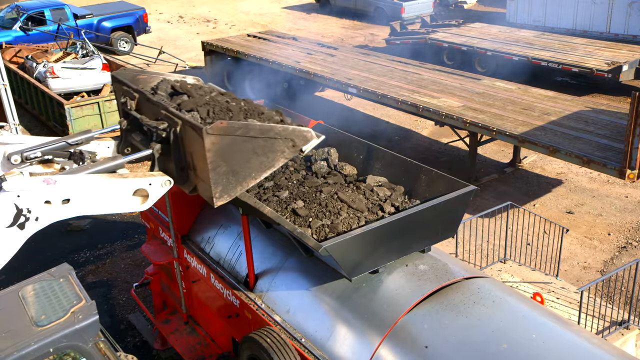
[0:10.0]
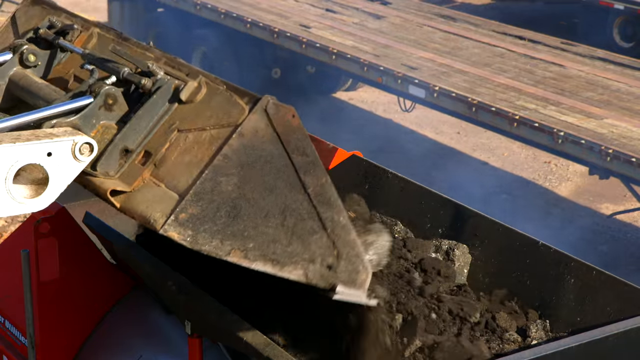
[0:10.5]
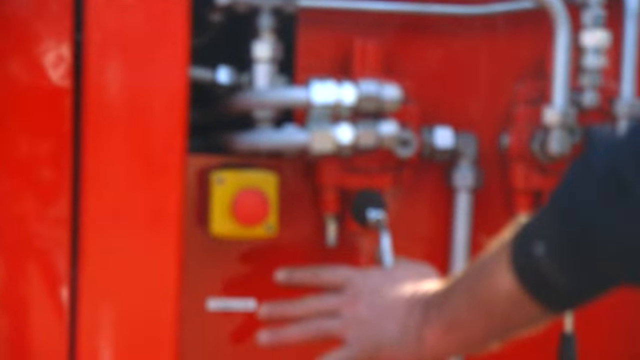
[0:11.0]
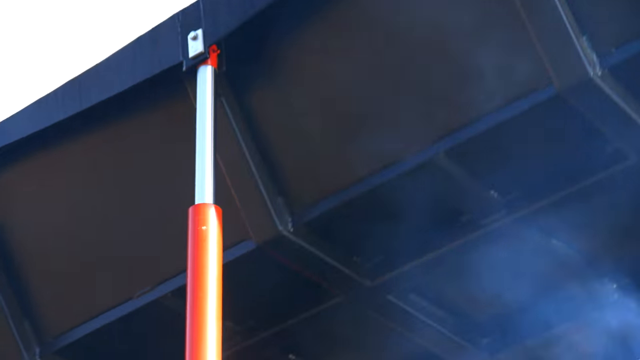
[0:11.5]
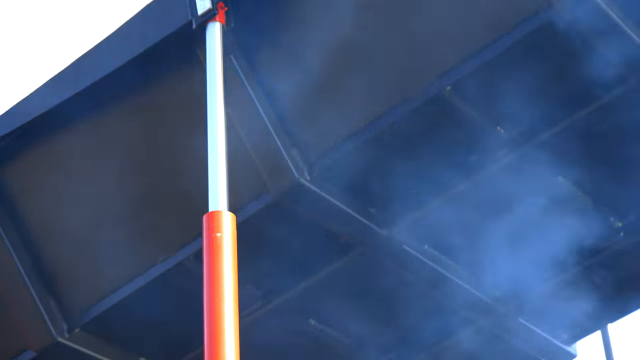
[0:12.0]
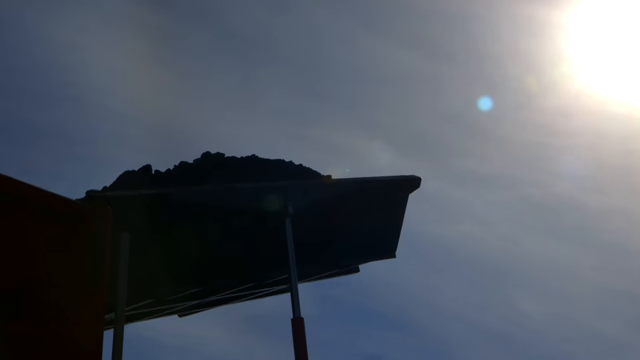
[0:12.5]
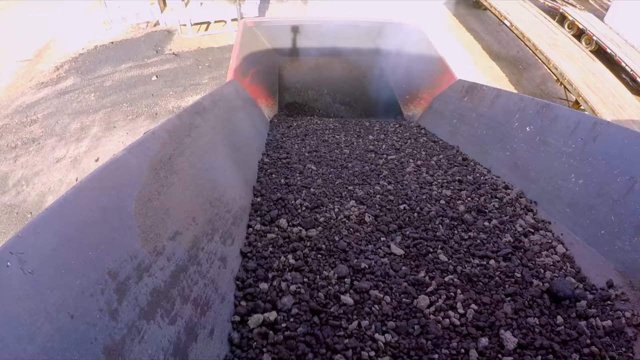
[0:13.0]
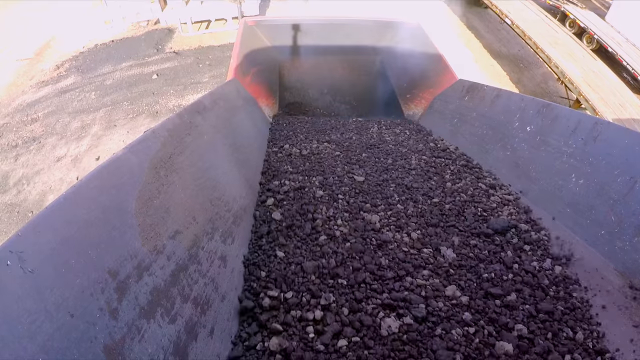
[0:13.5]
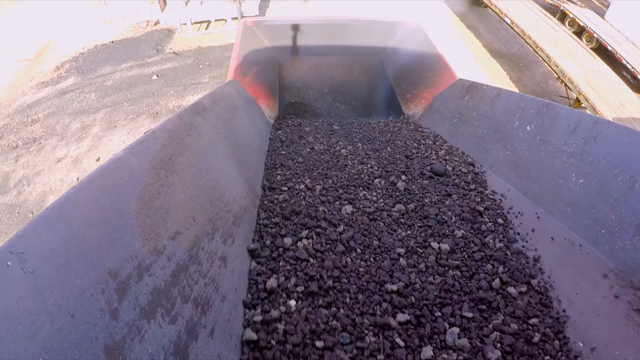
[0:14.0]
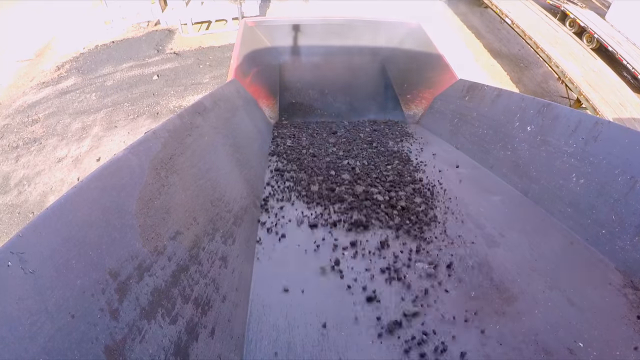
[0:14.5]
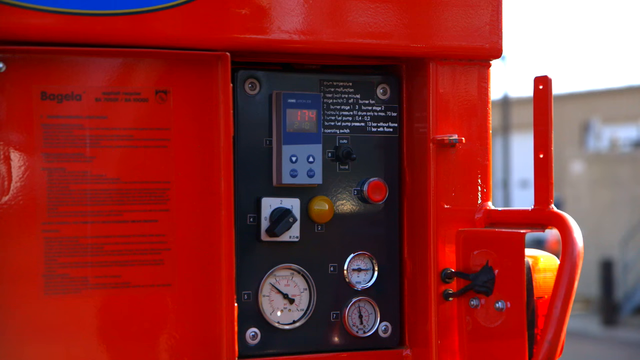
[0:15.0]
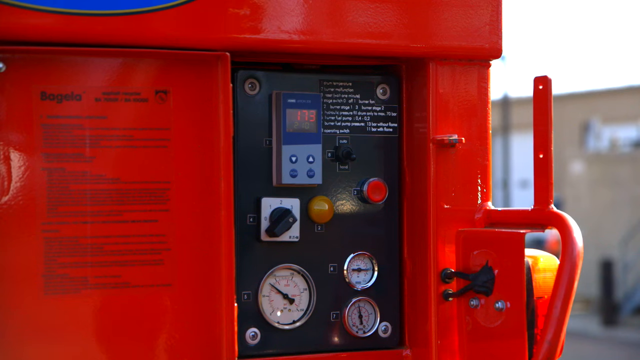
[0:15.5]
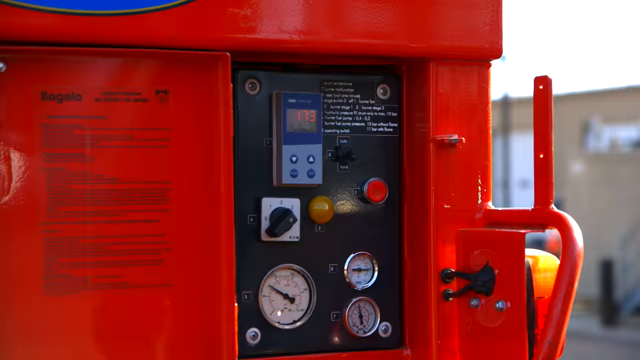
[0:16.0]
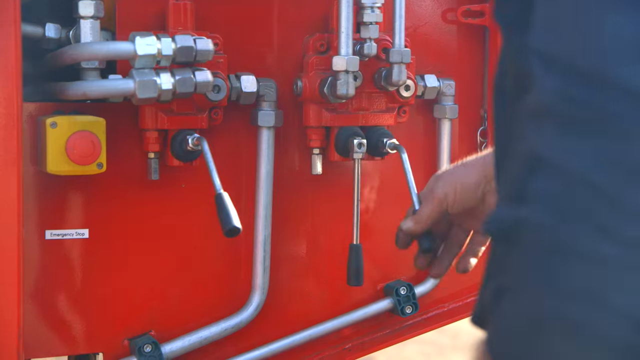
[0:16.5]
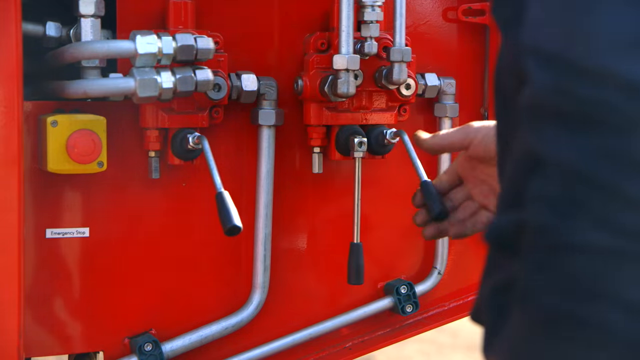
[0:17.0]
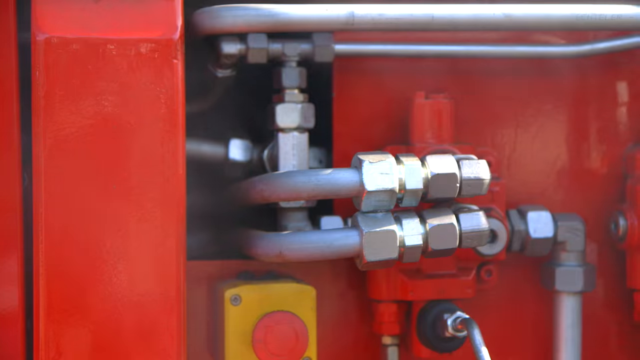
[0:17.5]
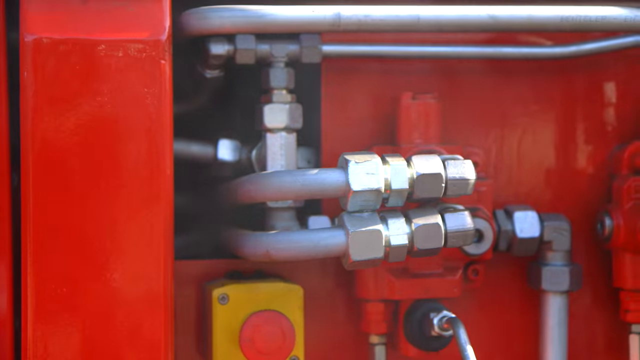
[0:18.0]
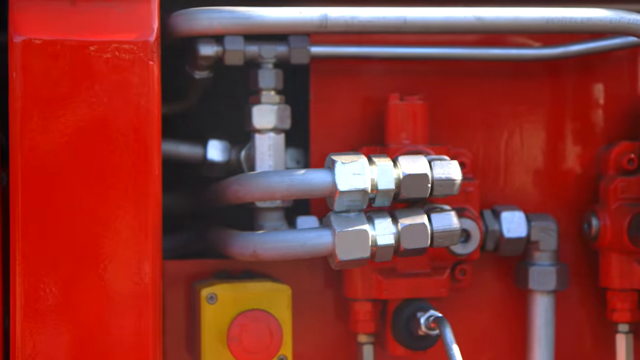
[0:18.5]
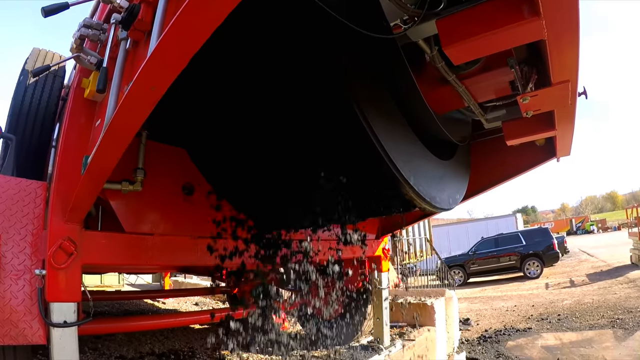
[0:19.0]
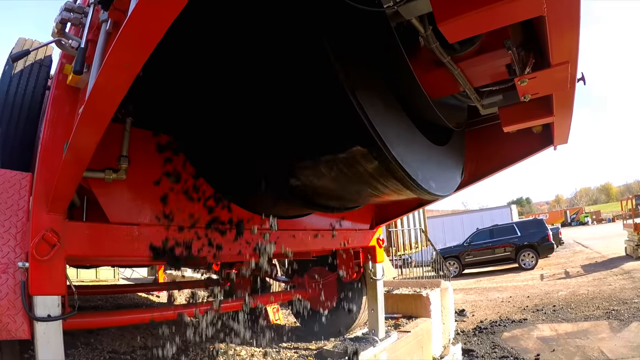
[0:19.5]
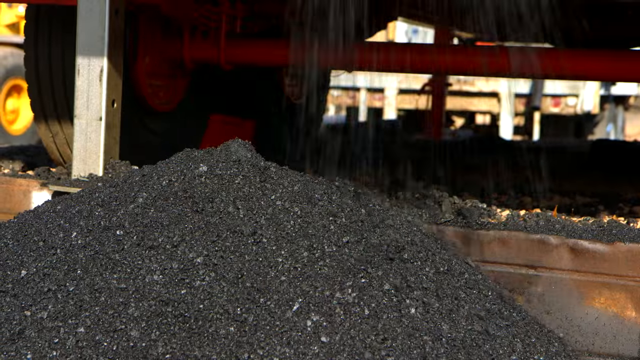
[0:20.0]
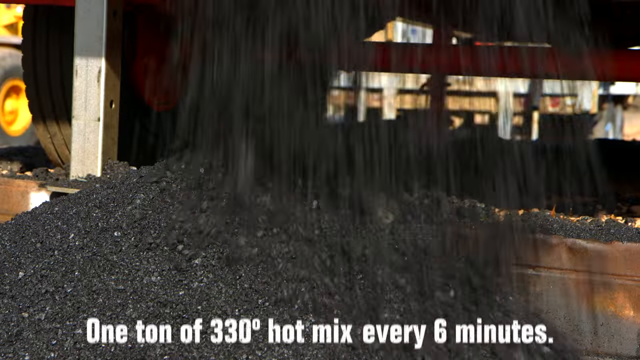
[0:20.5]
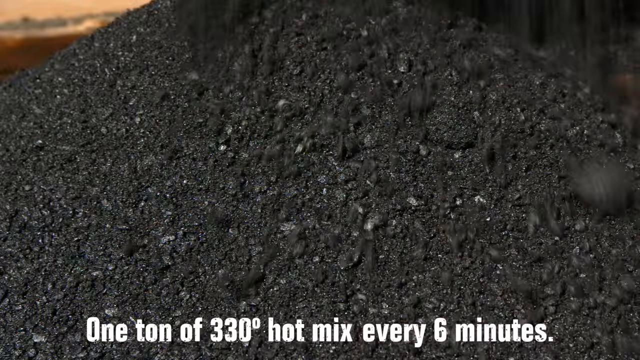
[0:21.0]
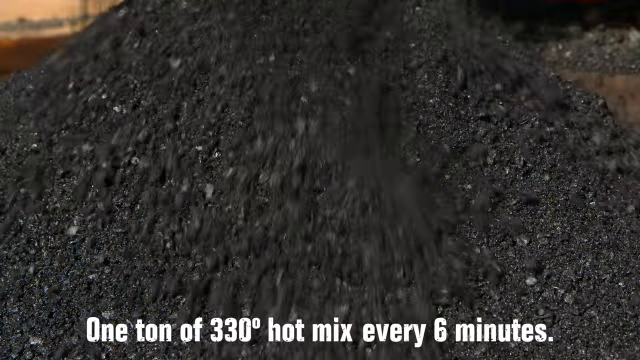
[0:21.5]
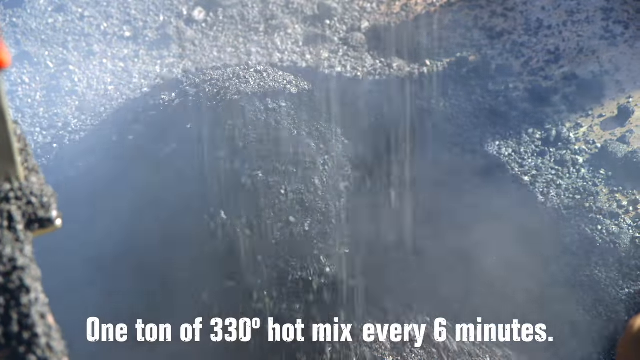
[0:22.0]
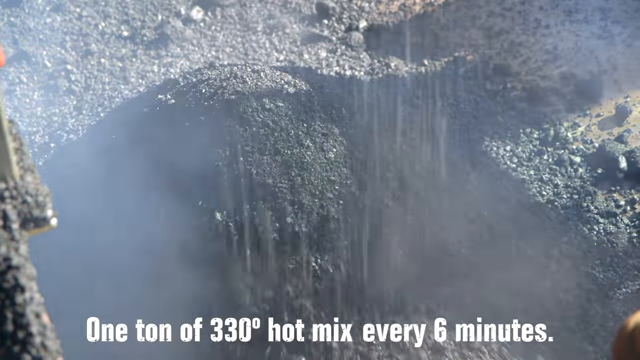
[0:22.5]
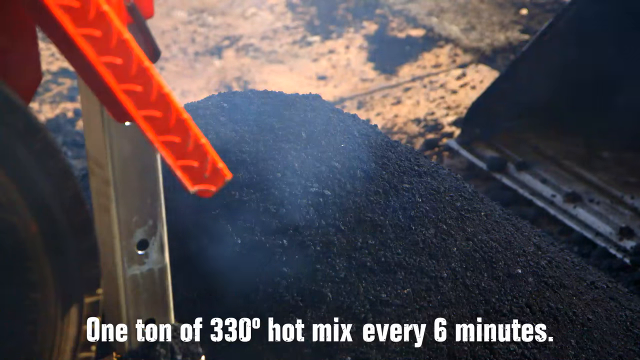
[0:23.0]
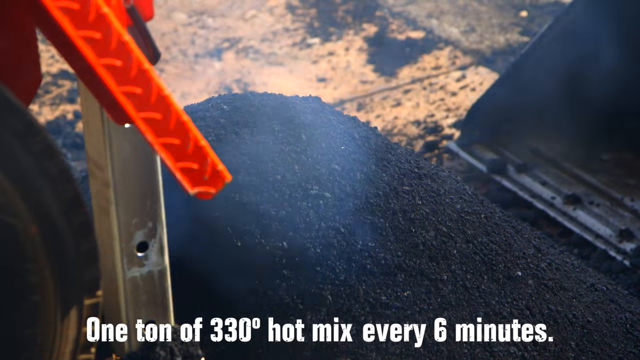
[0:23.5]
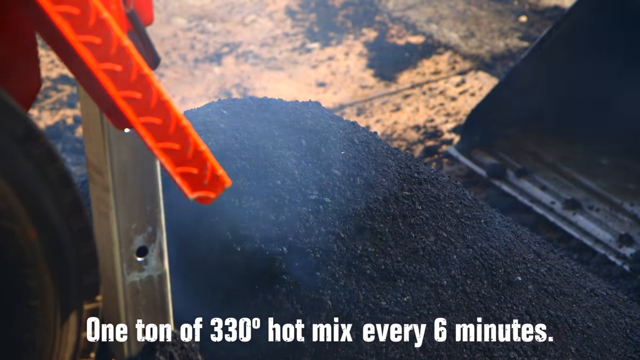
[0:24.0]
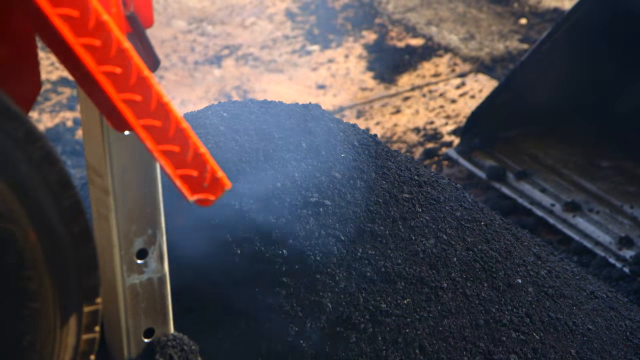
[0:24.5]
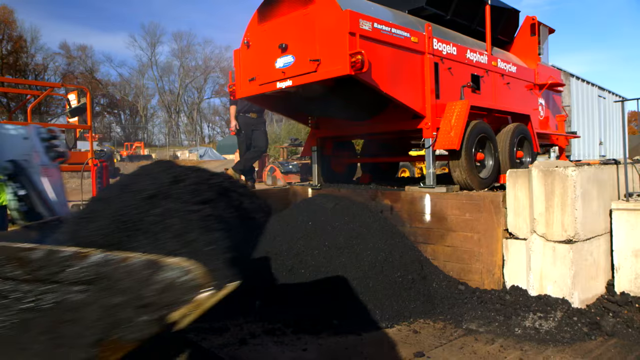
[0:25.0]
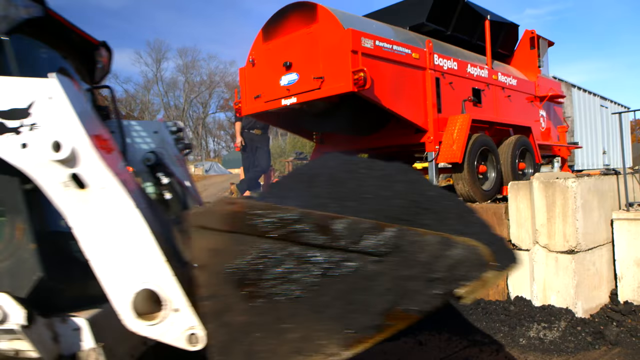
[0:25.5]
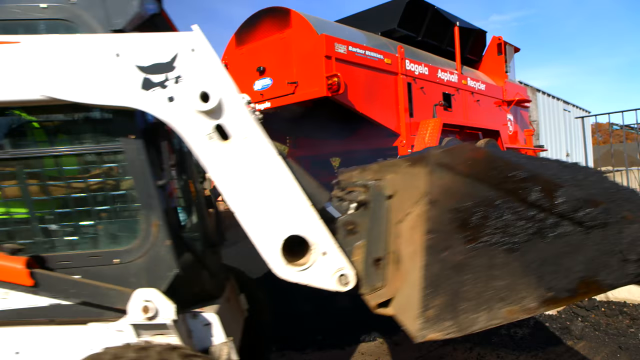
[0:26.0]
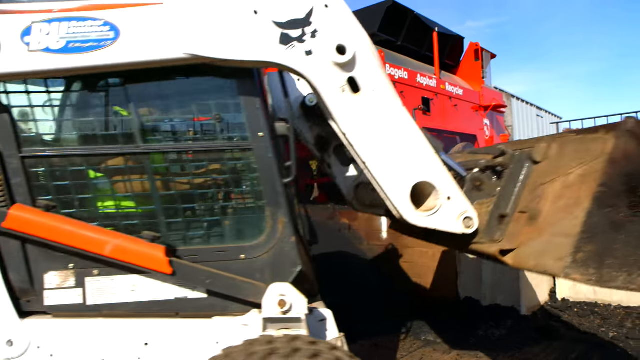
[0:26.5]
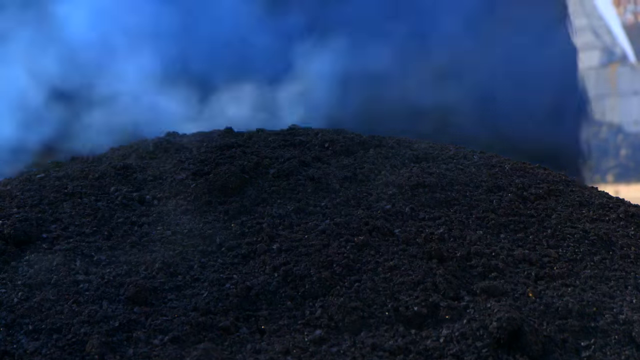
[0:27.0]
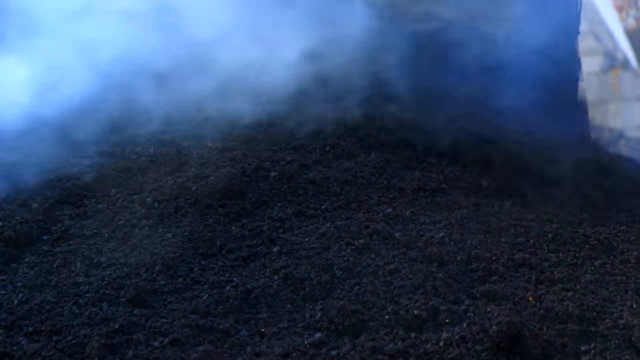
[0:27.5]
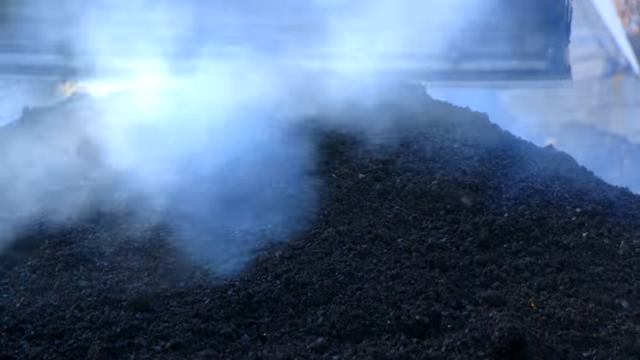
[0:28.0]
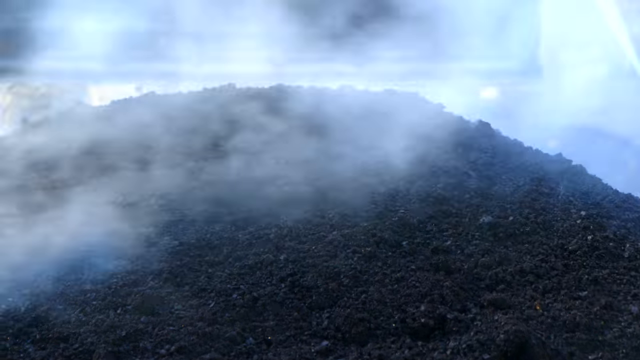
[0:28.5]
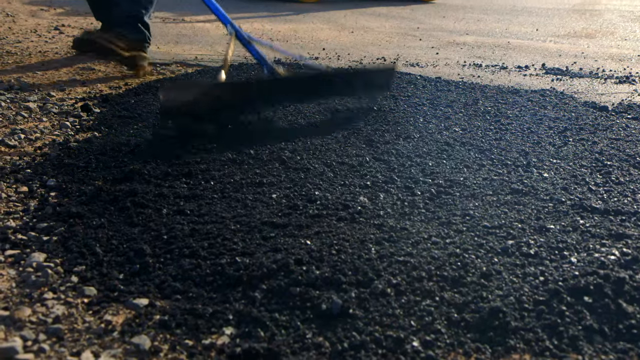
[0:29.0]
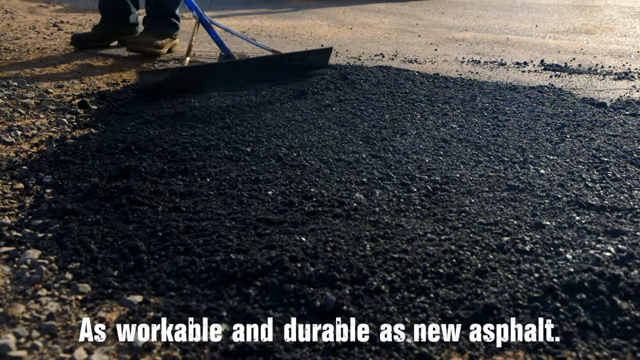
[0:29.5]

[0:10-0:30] Construction equipment is operated. A digger pours rocks into a large container, and a man operates a black lever on a red metal machine. A skip is hoisted up in the air with piston-like levers, and the camera then shows black rubble being poured into a large metal box. Steam appears to come out as a man lifts the lever on the red machine, which has lots of chrome-coloured pipes and valves; on the underside of the machine, black bitumen falls as a drum rotates. Text at the bottom says "one ton of 330 degrees hot mix every six minutes". The machinery appears to break down larger chunks of rock into finer green-black road covering material, and steam comes out of the heap that comes out of the red machine after processing.